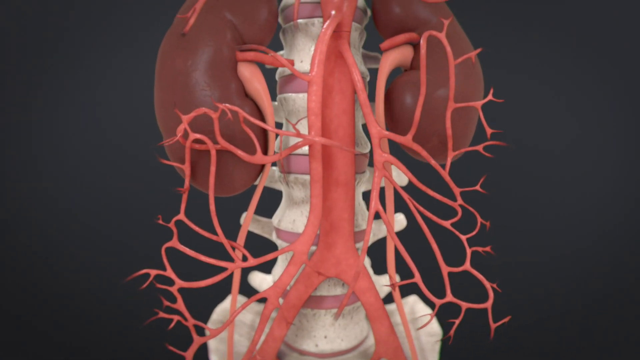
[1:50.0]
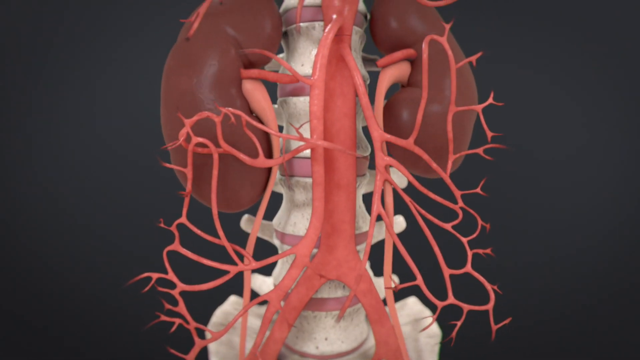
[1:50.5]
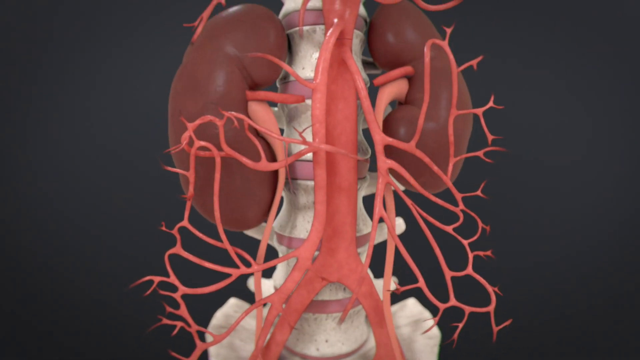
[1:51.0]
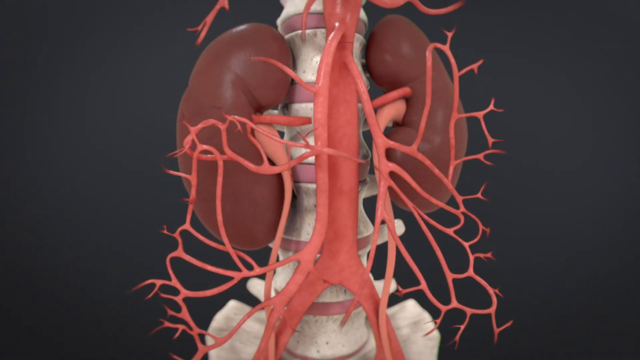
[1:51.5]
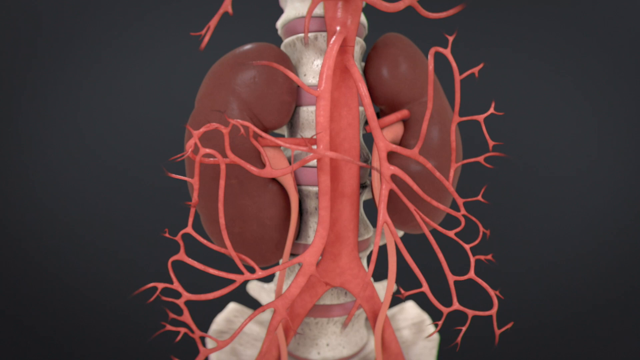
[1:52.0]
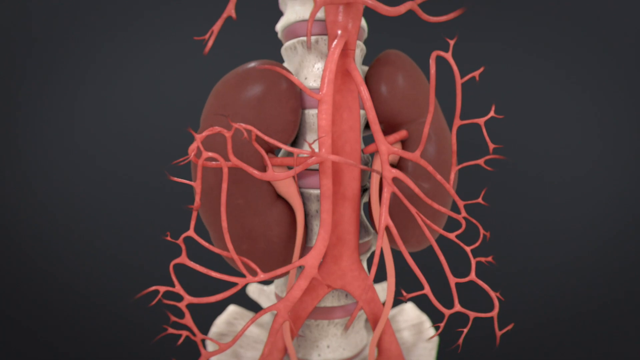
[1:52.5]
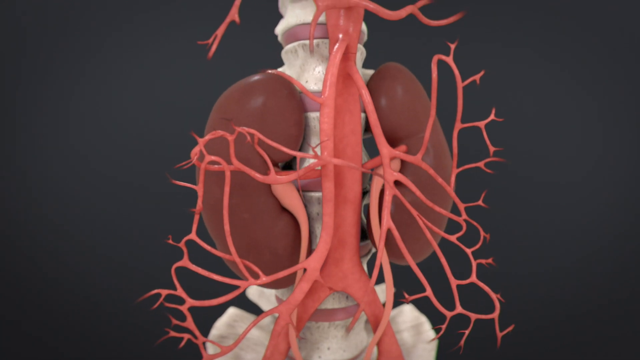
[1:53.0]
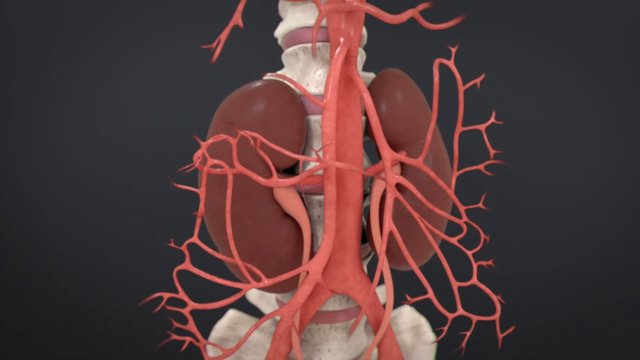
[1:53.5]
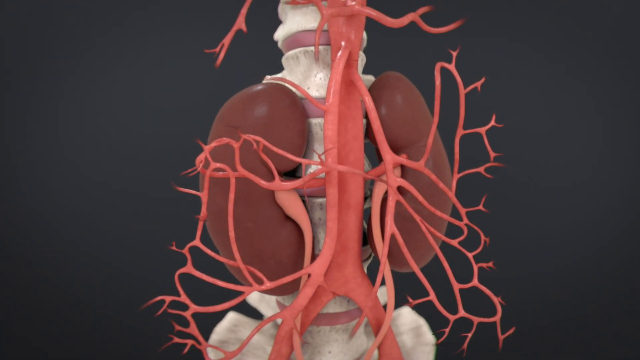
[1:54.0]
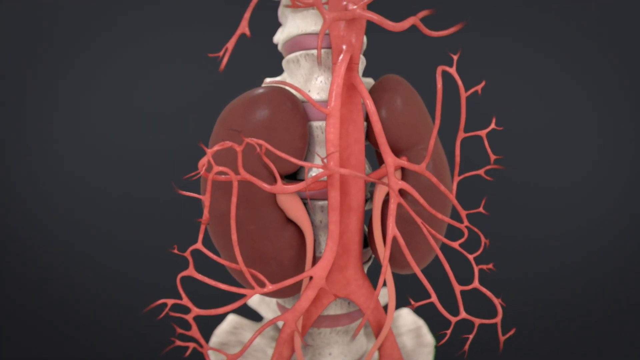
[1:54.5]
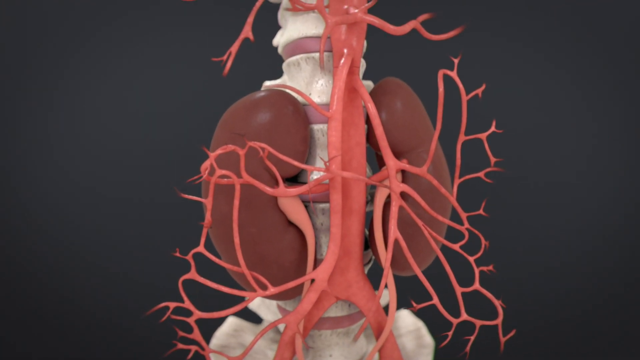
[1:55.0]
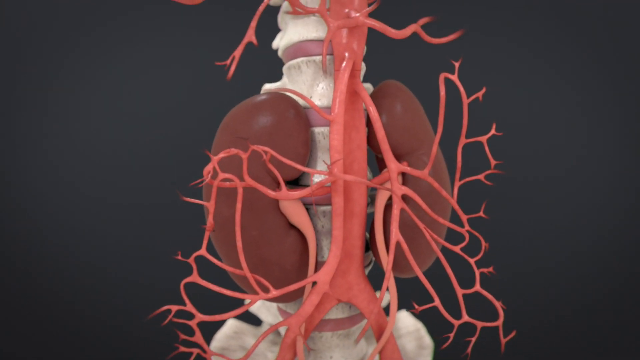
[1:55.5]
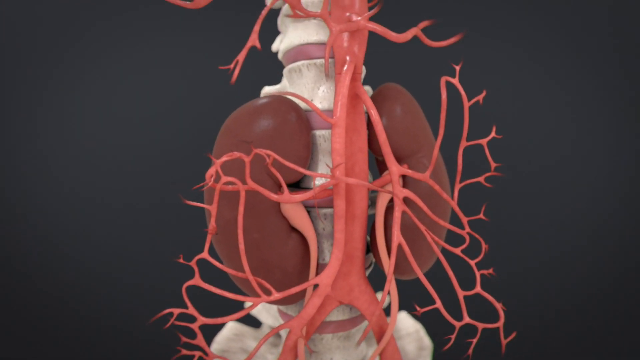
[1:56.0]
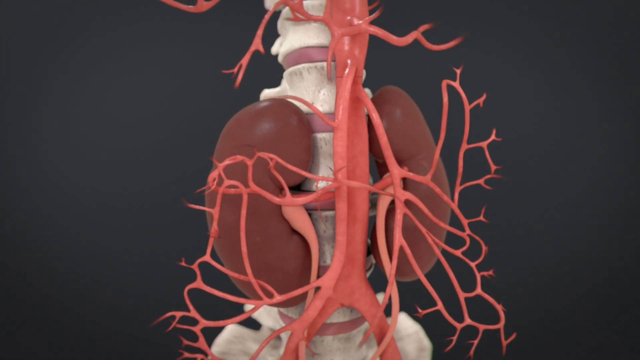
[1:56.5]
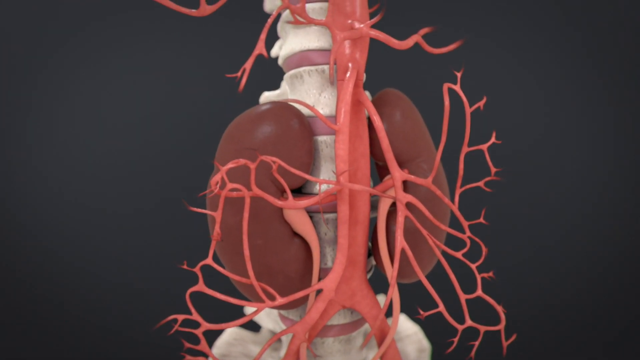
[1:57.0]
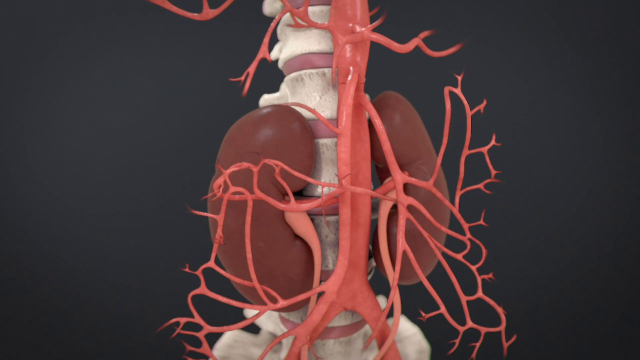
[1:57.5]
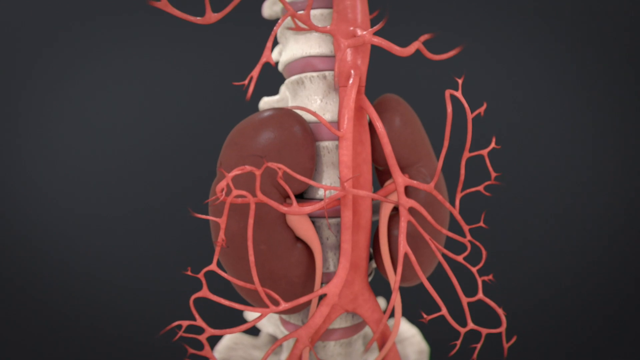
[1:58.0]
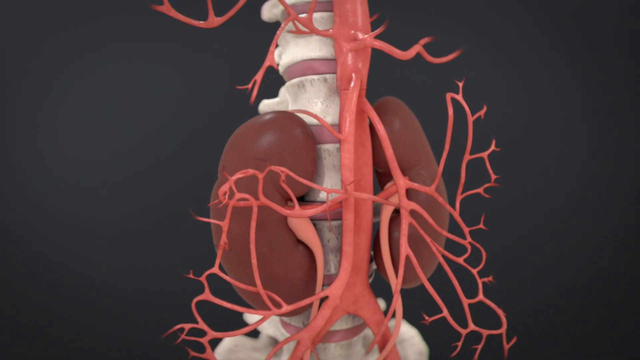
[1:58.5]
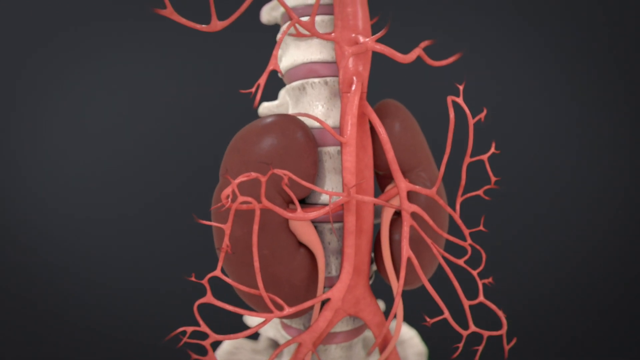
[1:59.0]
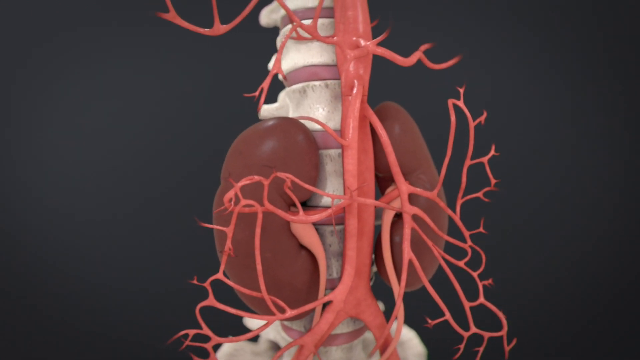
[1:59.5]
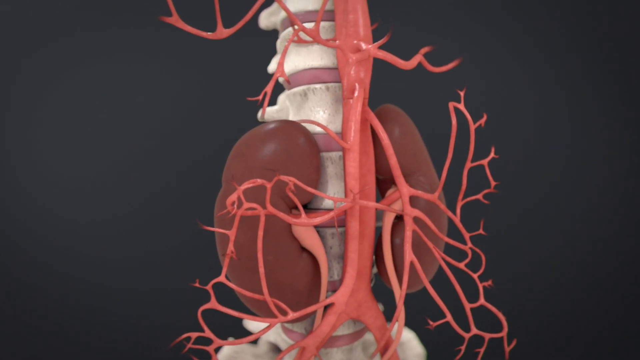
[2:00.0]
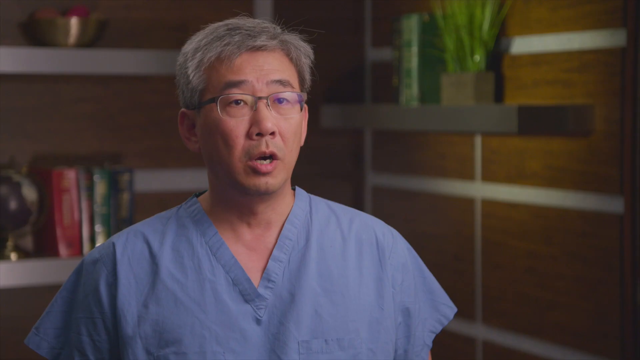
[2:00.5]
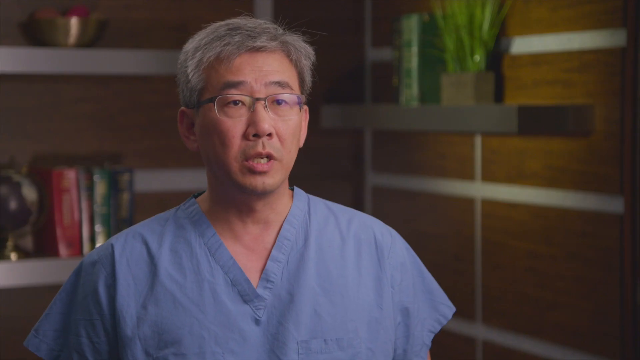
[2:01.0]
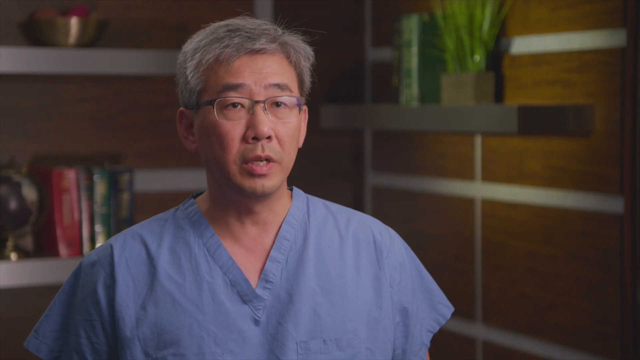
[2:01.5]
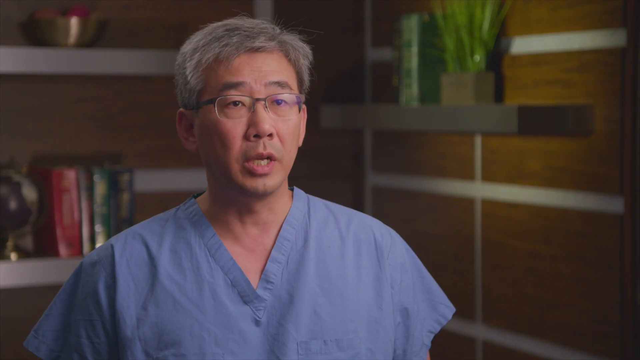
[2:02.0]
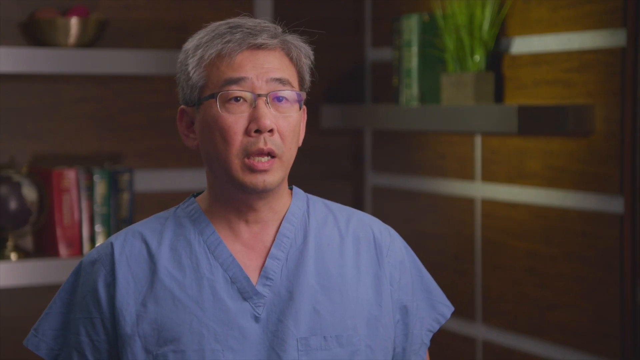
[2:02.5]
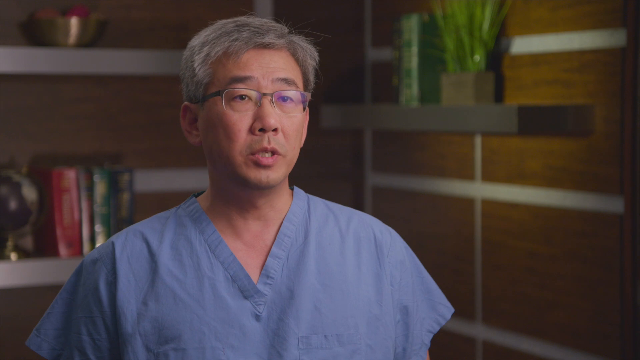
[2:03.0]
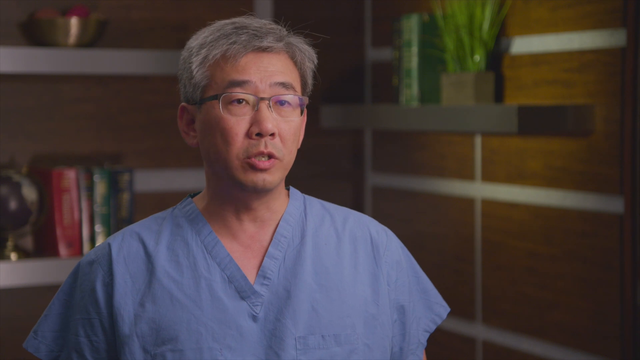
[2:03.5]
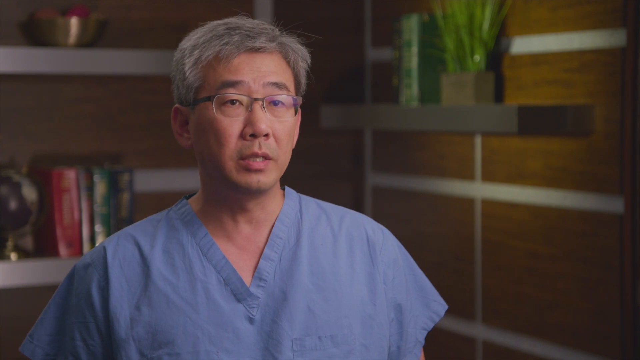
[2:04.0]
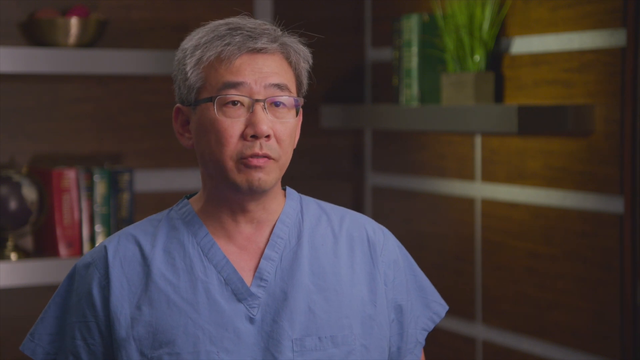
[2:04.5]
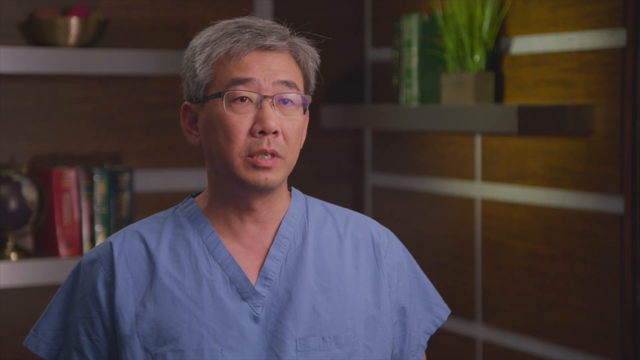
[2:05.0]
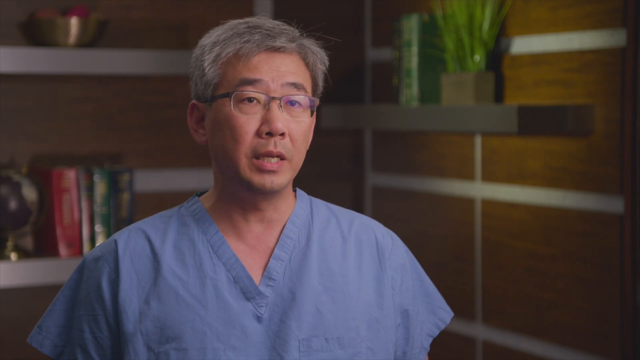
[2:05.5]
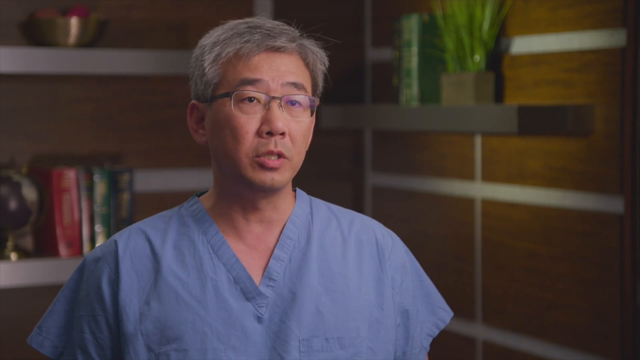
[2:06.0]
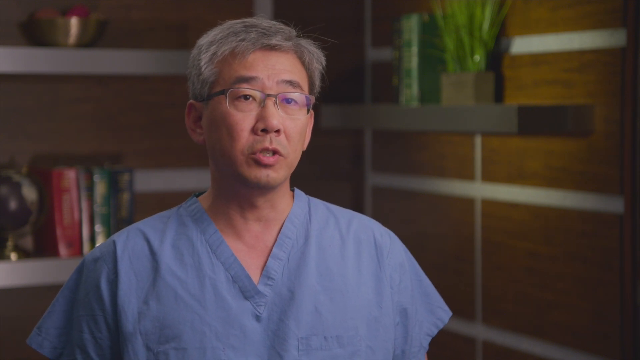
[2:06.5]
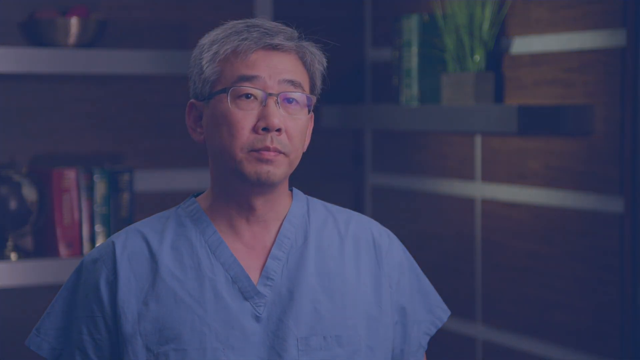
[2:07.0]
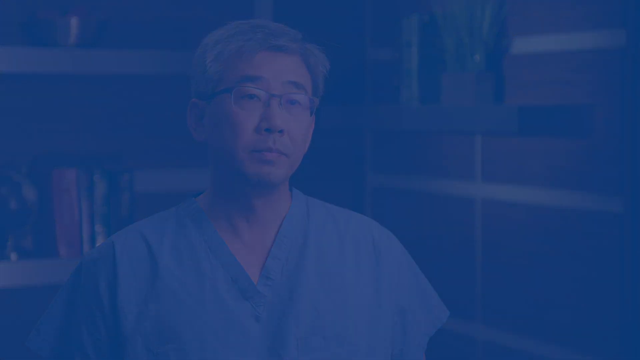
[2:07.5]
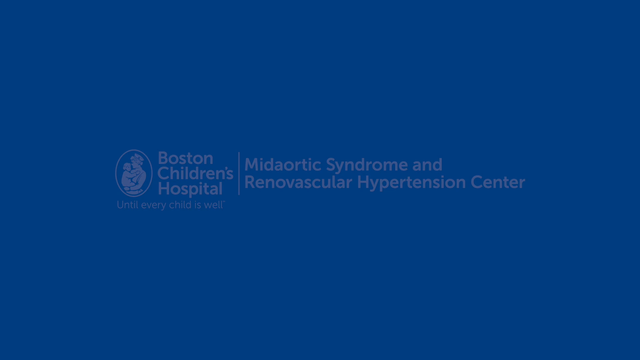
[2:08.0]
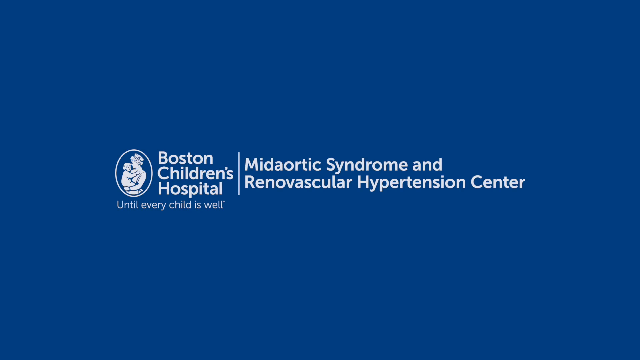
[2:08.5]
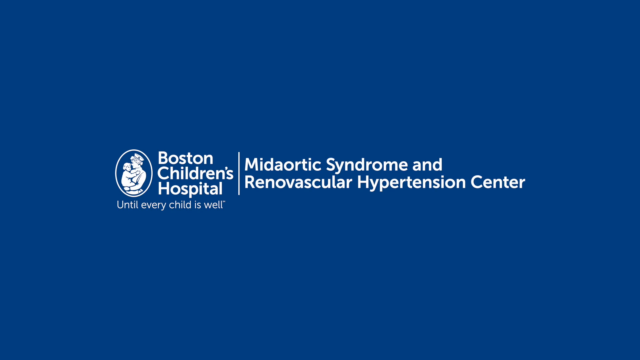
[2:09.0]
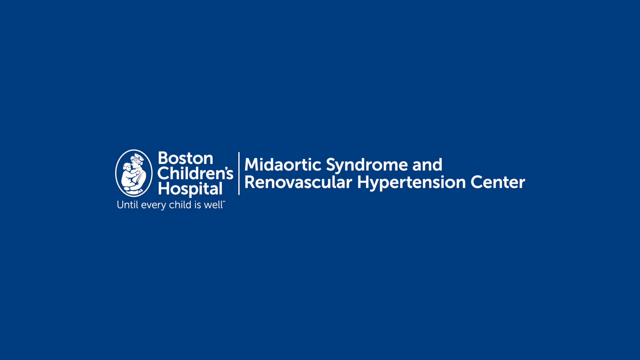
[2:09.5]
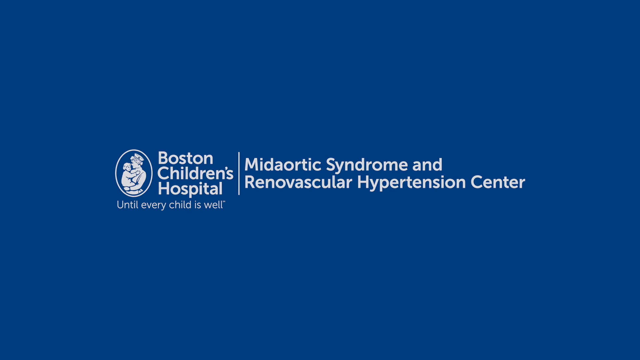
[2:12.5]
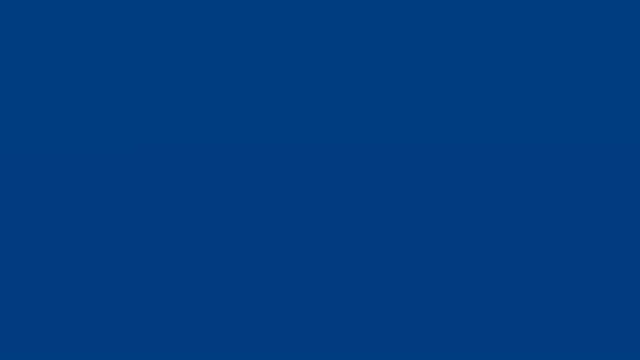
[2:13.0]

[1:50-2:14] A back view of the spine shows the nerve systems over top, and the kidneys drop down in the animation. The scene changes to a side view of the spine and nerve system with the device placed horizontally between them. As the device disappears, the nerve system and the kidneys connect, the kidneys drop down, and the nerve system becomes what looks like a strong trunk in the middle. The scene returns to the doctor sitting in the wood-paneled office, speaking. The video ends on a dark blue screen with a white logo on the left: an oval with a white outline containing a white silhouette of a woman nurse holding a baby, with "Boston Children's Hospital" to the right of it and "Until Every Child Is Well" centered at the bottom. A dashed line separates Boston Children's Hospital on the left from the Mid-Aortic Syndrome and Renovascular Hypertension Center on the right. This screen then disappears, and the video ends on a black screen.